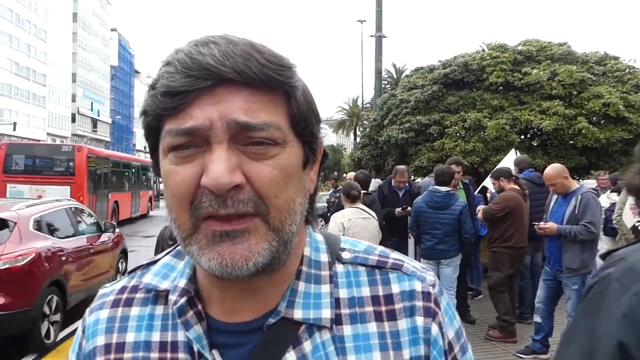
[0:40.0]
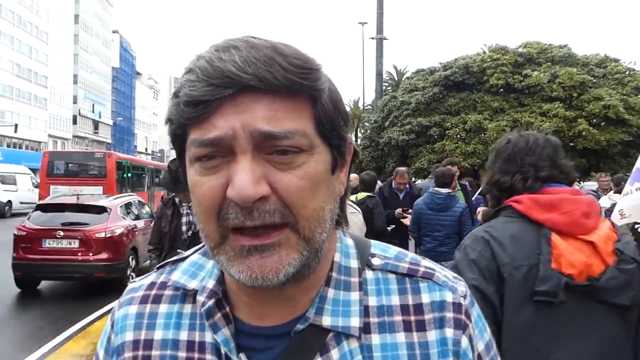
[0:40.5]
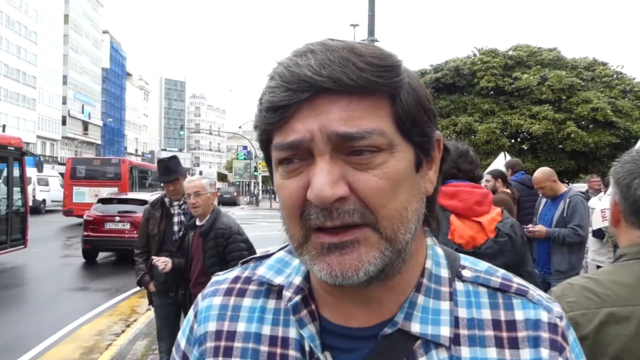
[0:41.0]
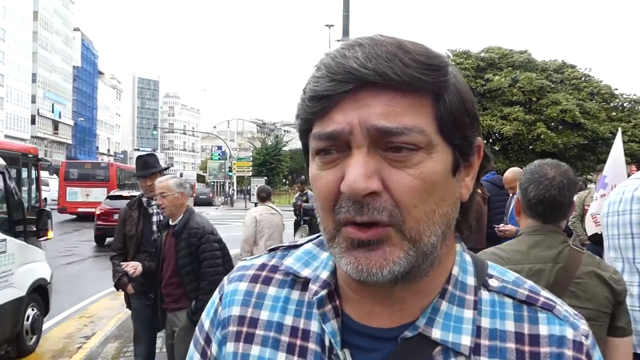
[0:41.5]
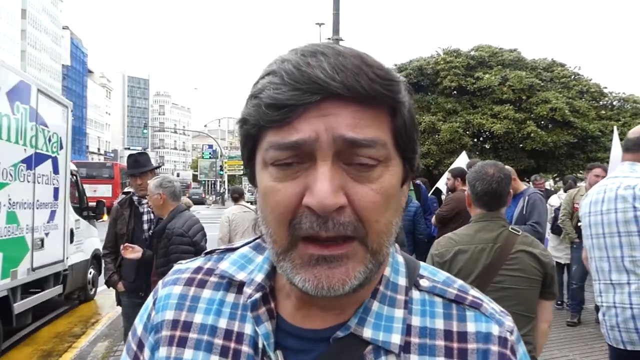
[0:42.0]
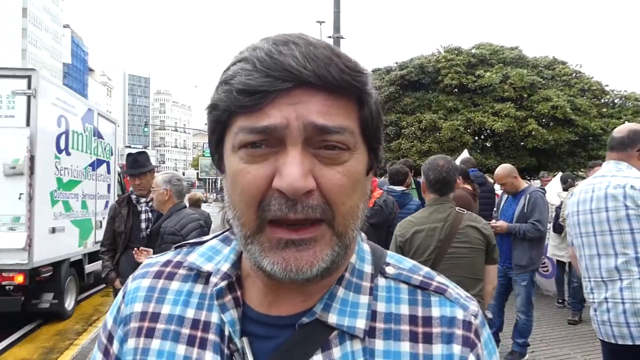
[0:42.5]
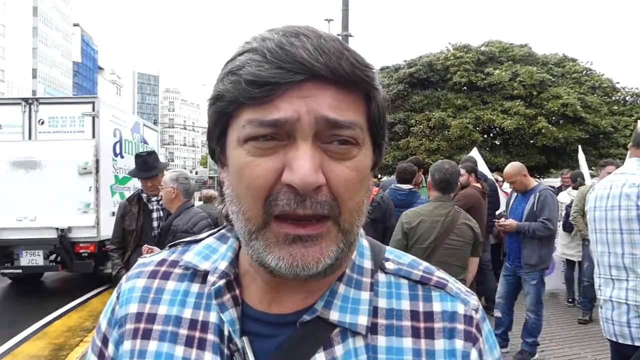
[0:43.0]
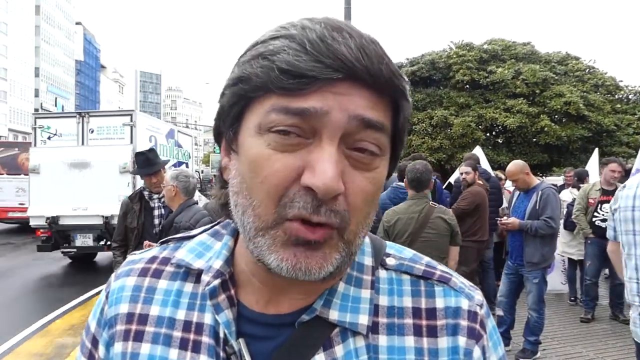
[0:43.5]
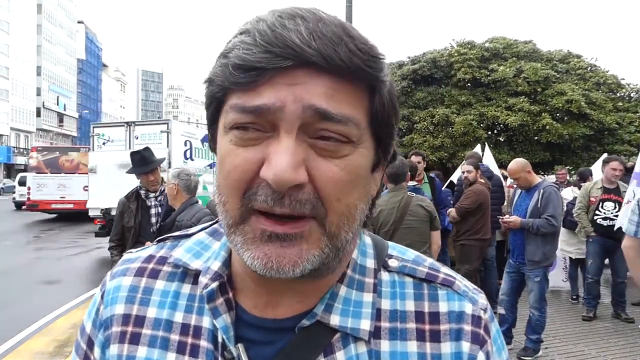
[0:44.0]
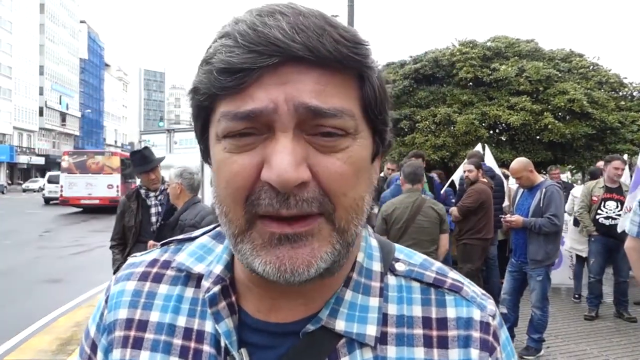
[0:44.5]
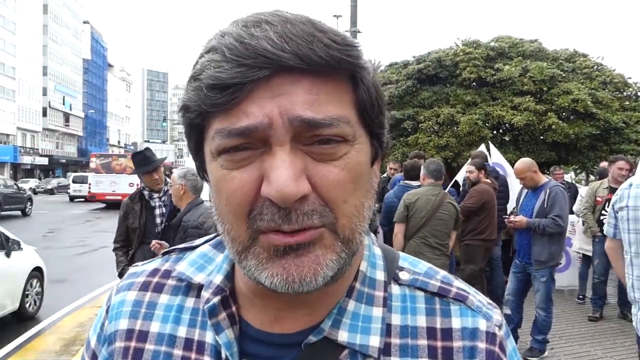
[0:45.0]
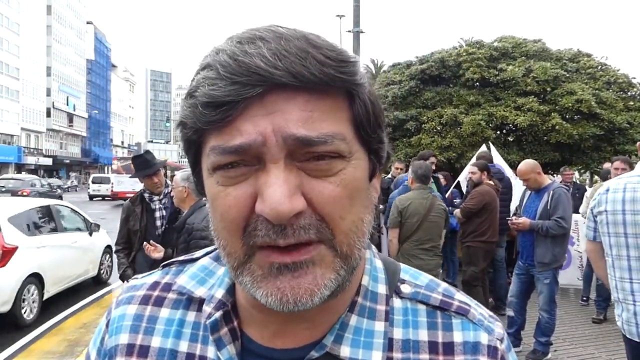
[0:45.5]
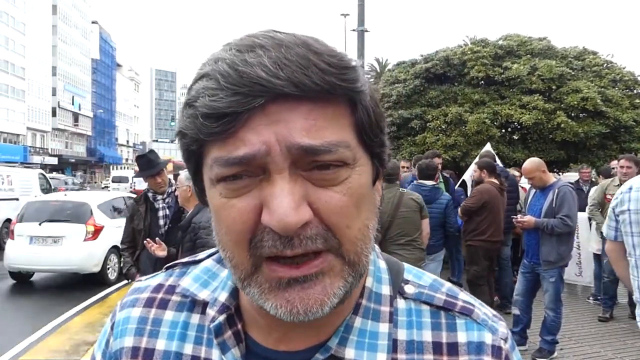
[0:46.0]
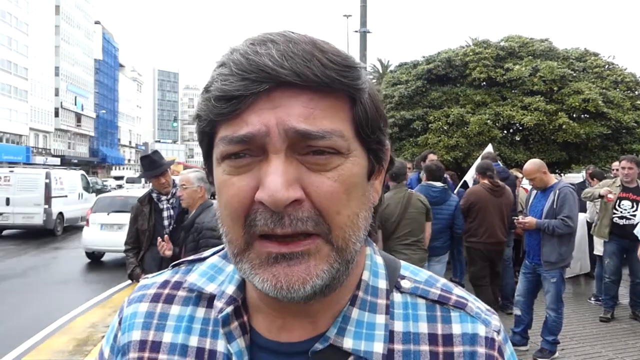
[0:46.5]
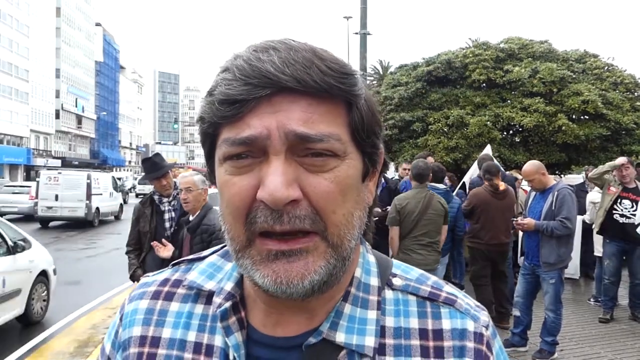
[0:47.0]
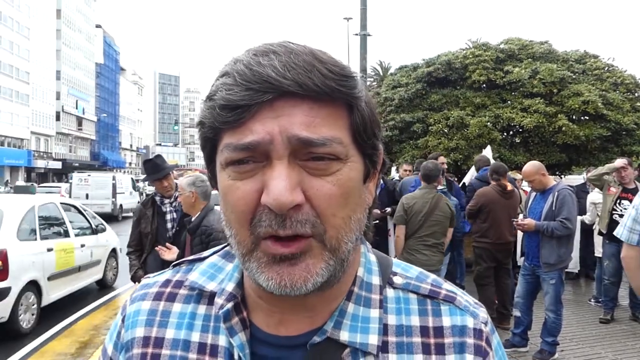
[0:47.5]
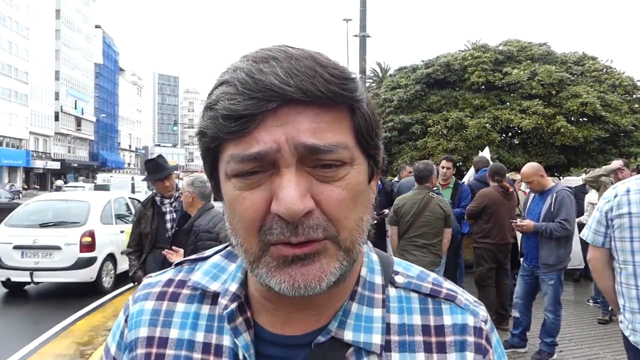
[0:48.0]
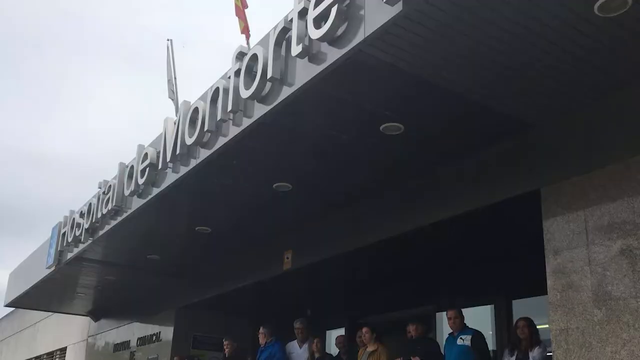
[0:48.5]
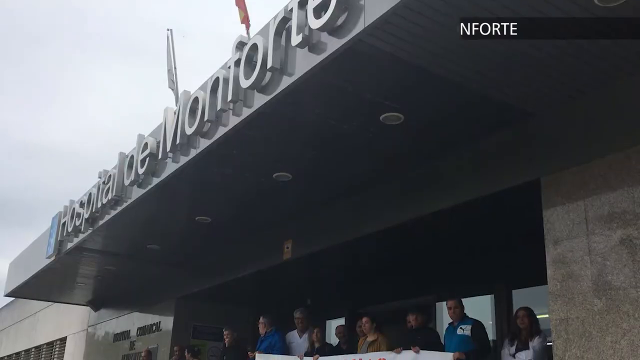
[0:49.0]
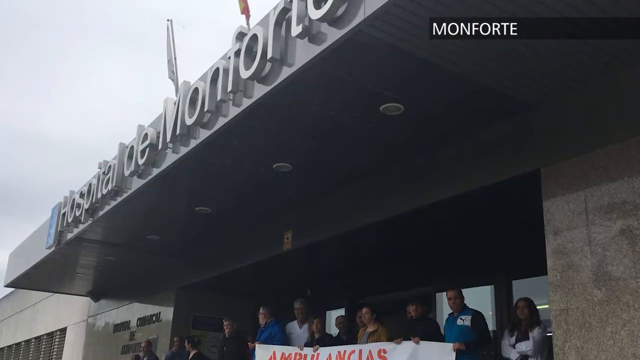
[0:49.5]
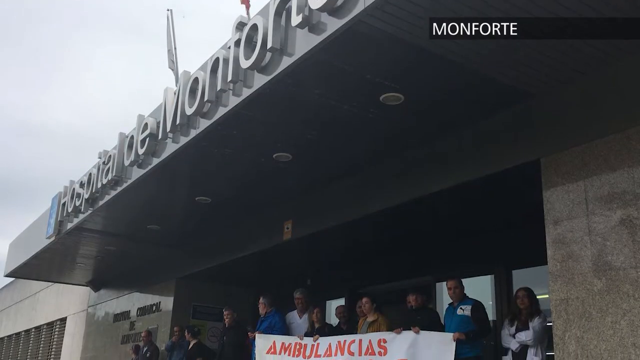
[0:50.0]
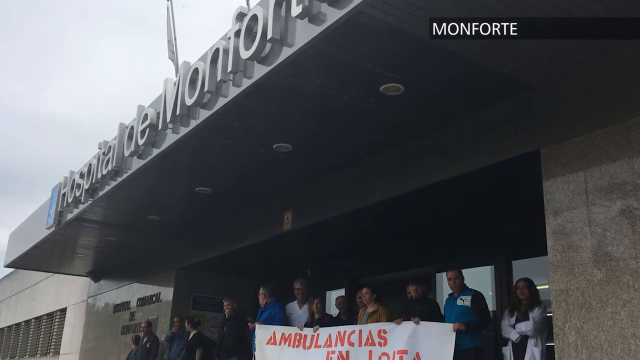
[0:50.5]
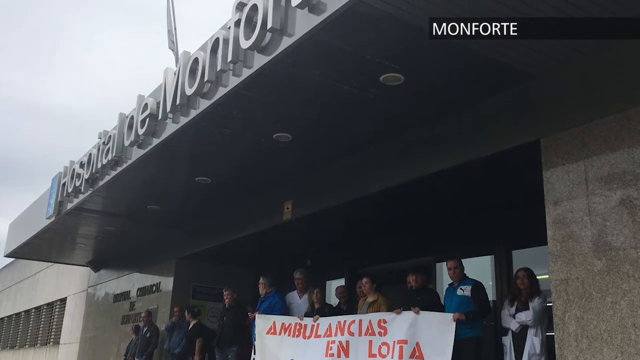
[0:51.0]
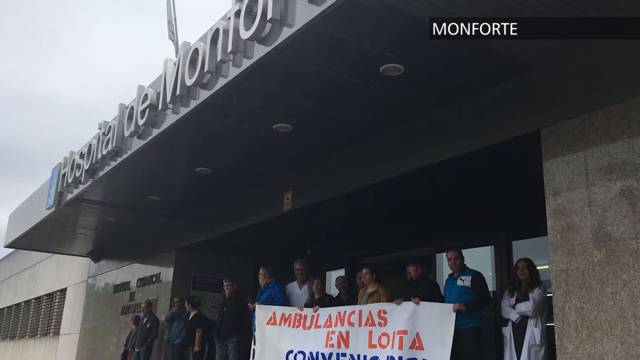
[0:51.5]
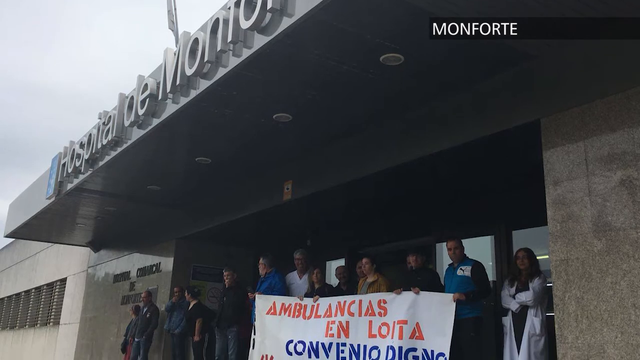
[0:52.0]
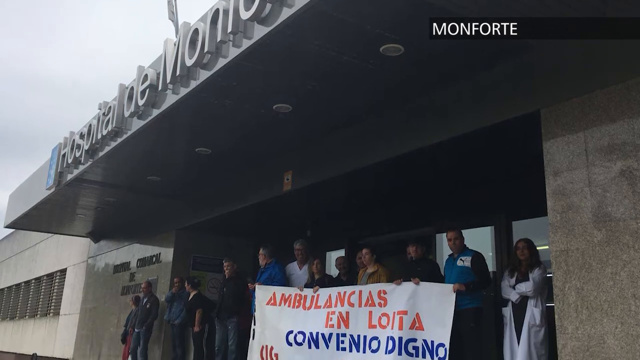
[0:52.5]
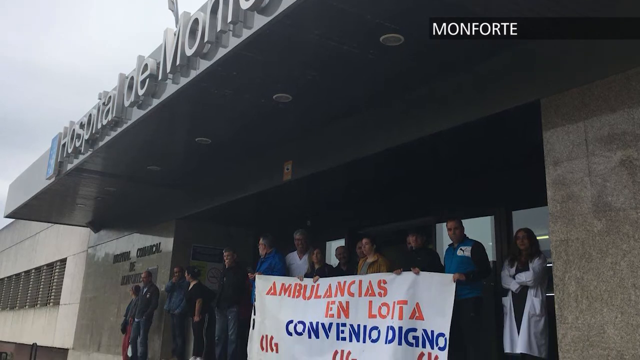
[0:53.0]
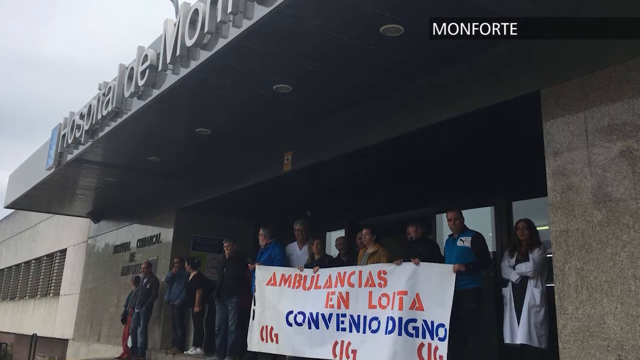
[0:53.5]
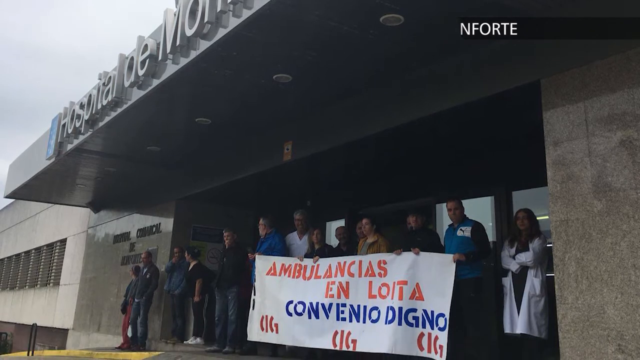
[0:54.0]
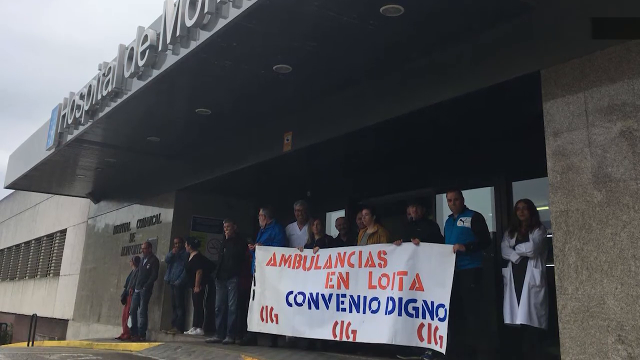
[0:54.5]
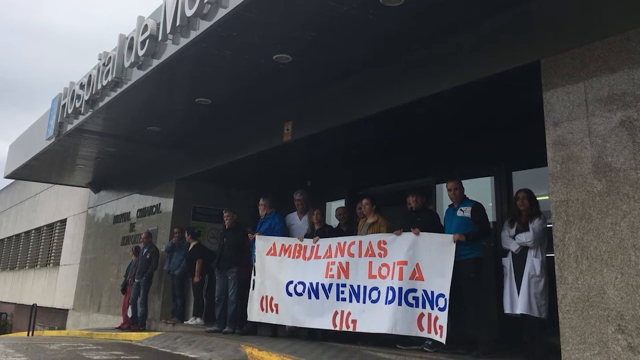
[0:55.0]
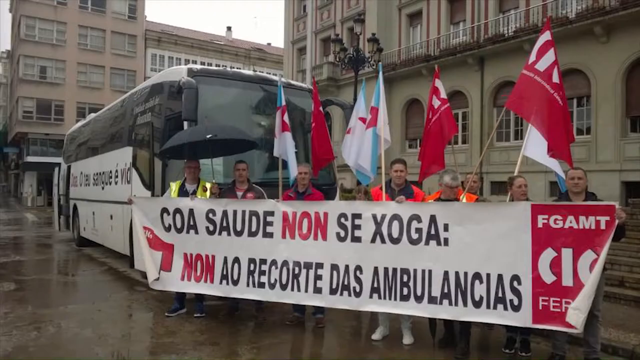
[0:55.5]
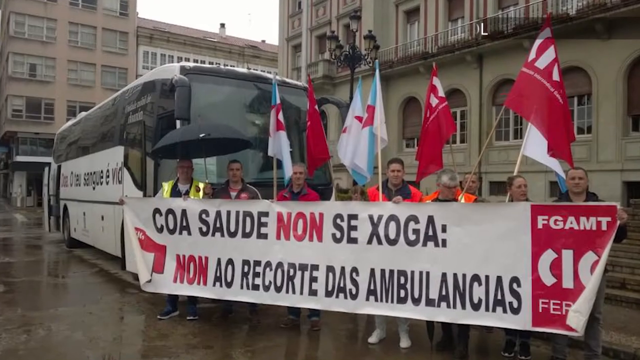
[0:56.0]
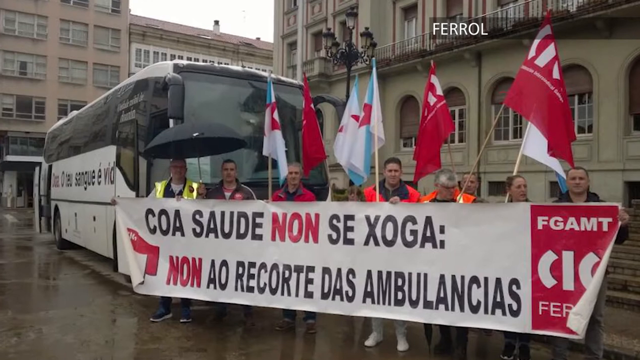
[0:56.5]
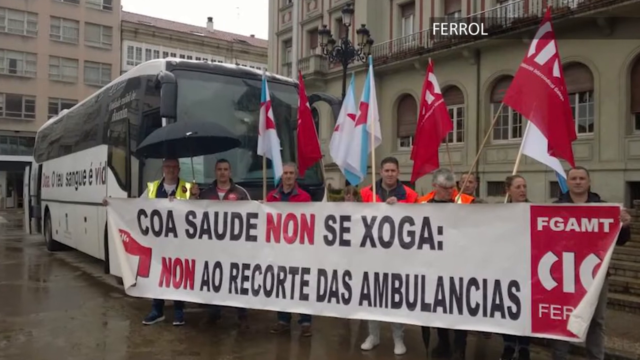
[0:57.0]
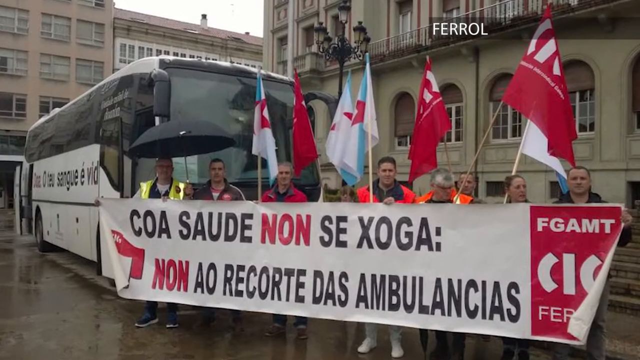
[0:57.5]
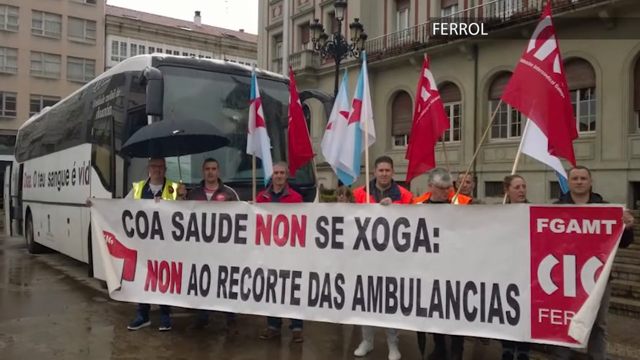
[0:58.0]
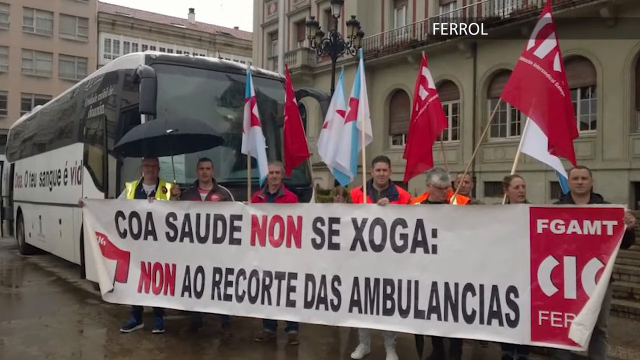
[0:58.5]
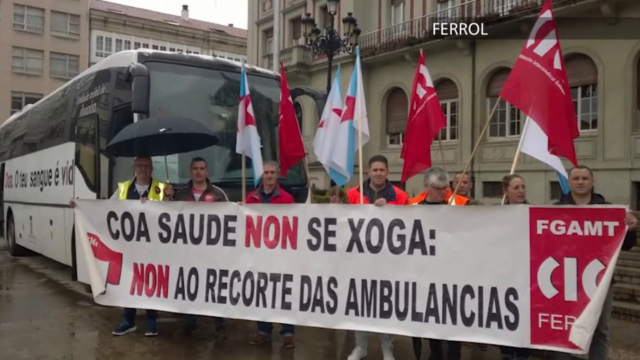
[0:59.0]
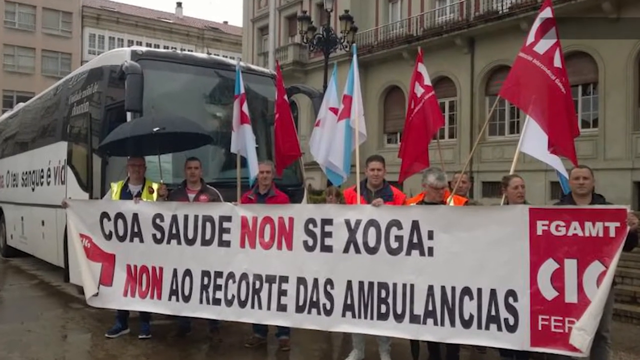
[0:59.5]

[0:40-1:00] The news story on location continues with an interview of Jesus, the man in the blue checked shirt, shown in a head-and-shoulders shot. In the background are other demonstrators, and cars and vans drive past on a very wide road with tall buildings on the left-hand side. The shot changes to outside the Hospital de Montfort, where around 14 people stand in a single line in front of the hospital entrance with a banner. Next, around nine people, mainly men with one woman, hold another banner that also refers to the ambulances. A big coach is in the background. They all carry different flags: some red and white, some white and blue with a red star. The buildings behind them are very grand and look kind of Edwardian.